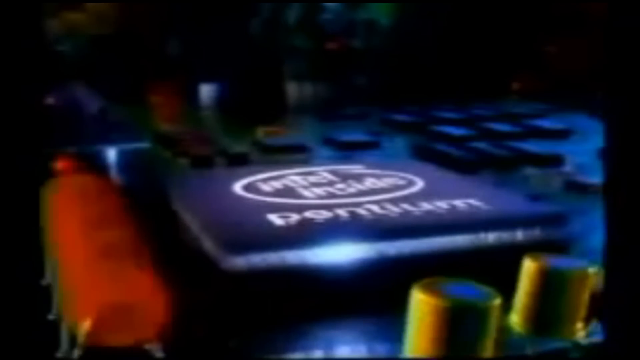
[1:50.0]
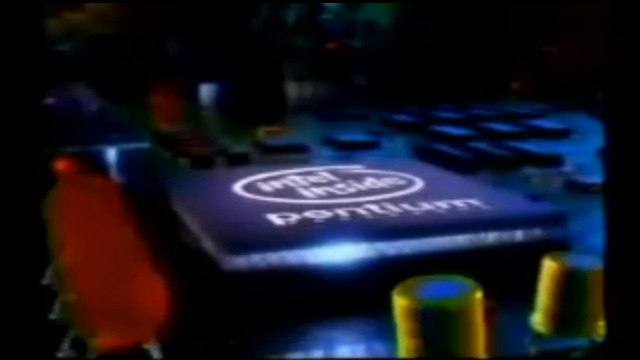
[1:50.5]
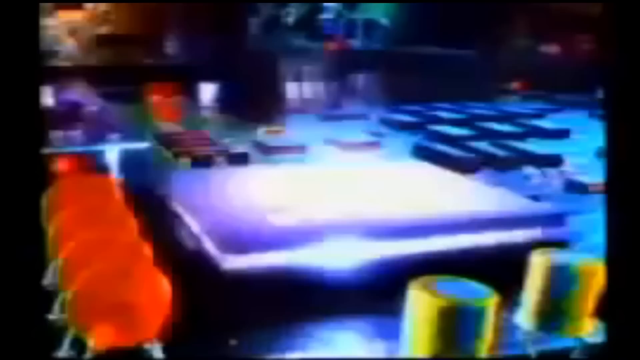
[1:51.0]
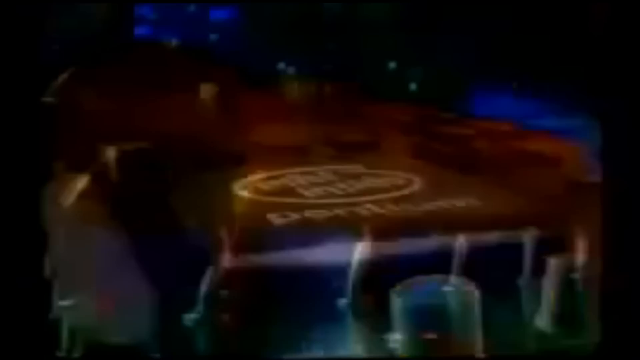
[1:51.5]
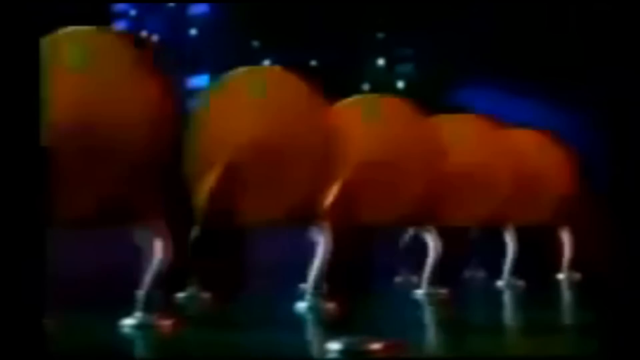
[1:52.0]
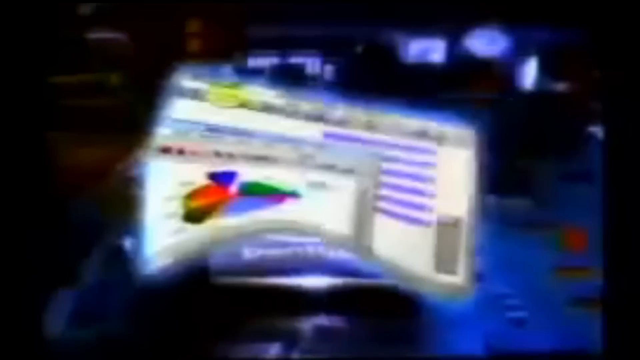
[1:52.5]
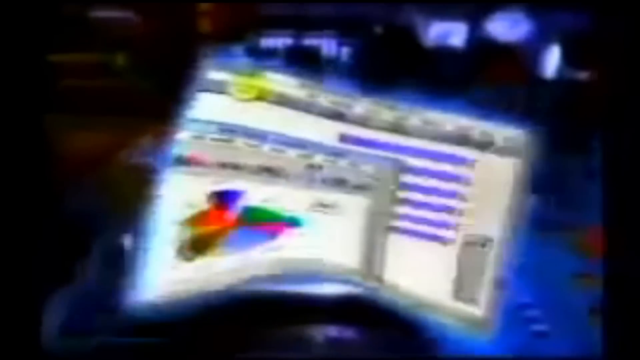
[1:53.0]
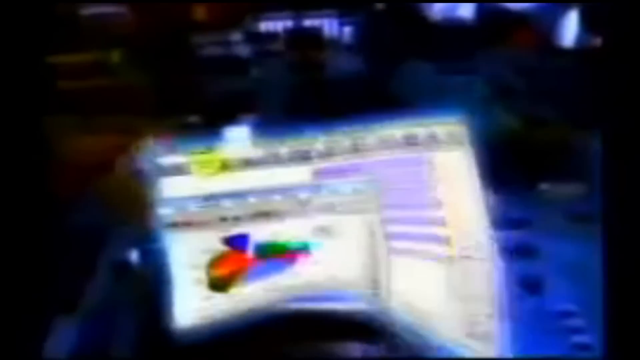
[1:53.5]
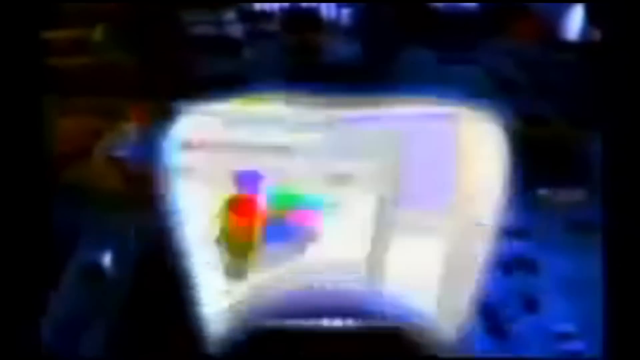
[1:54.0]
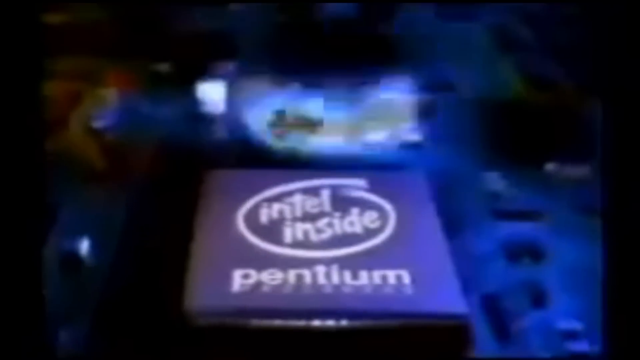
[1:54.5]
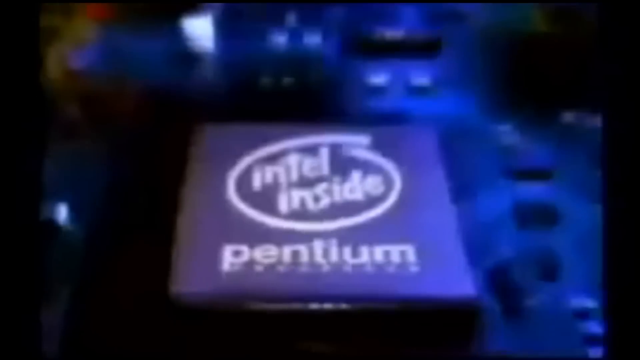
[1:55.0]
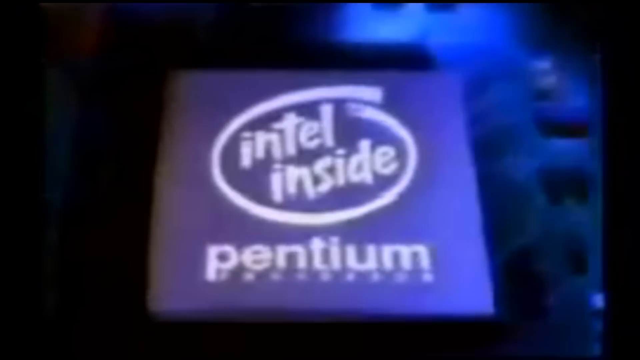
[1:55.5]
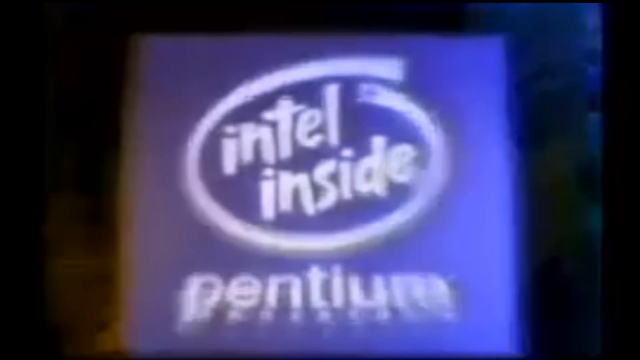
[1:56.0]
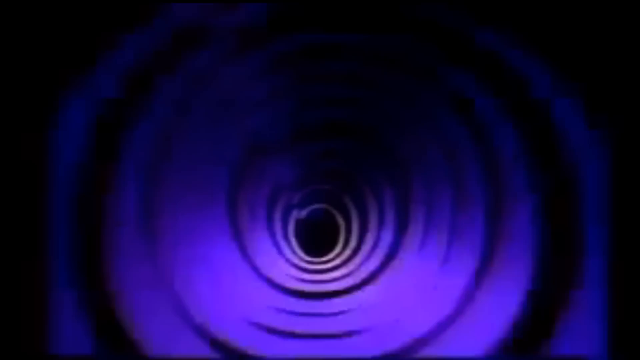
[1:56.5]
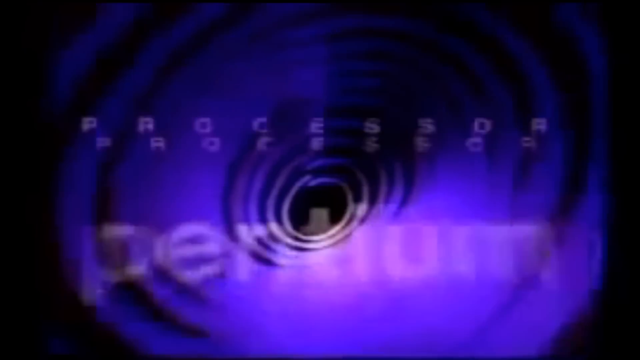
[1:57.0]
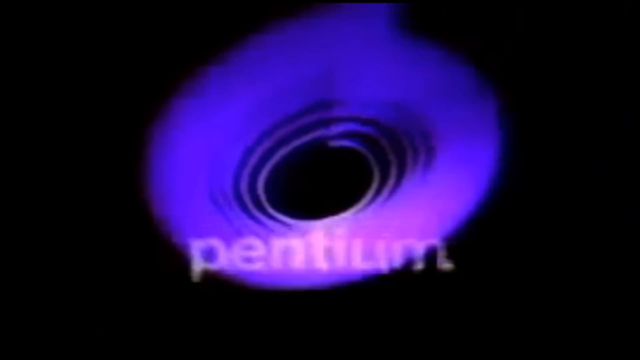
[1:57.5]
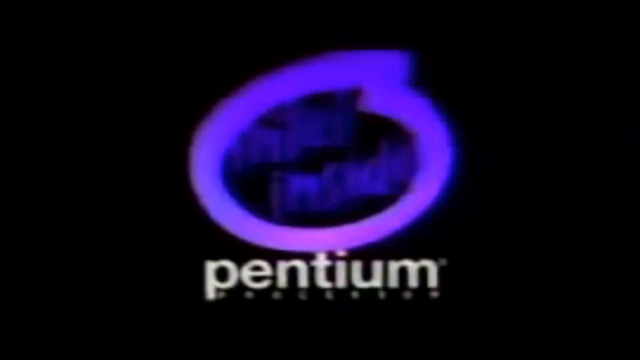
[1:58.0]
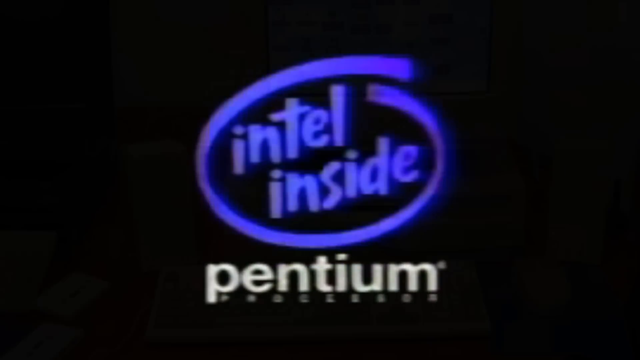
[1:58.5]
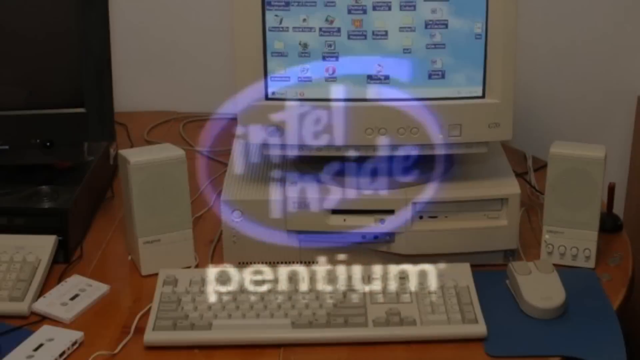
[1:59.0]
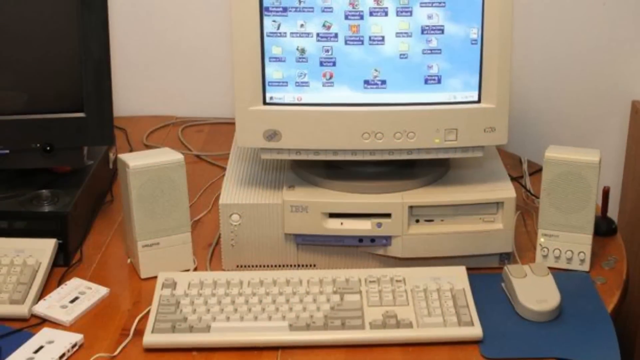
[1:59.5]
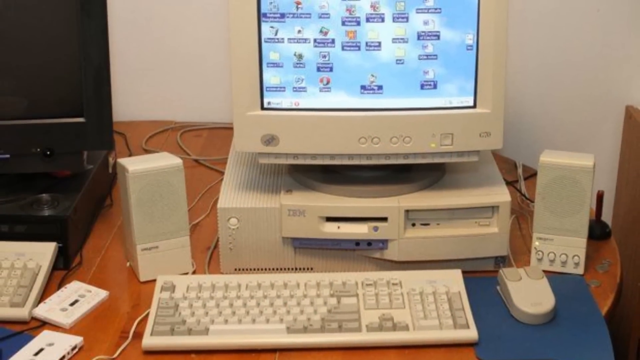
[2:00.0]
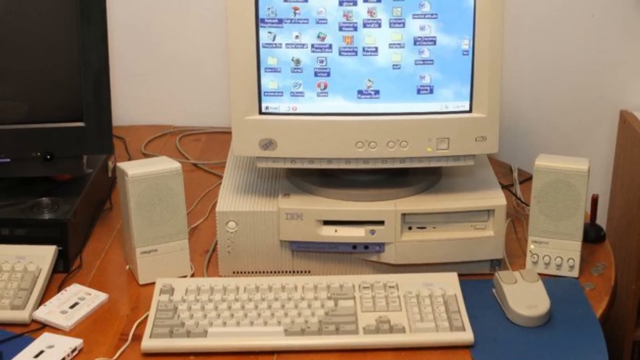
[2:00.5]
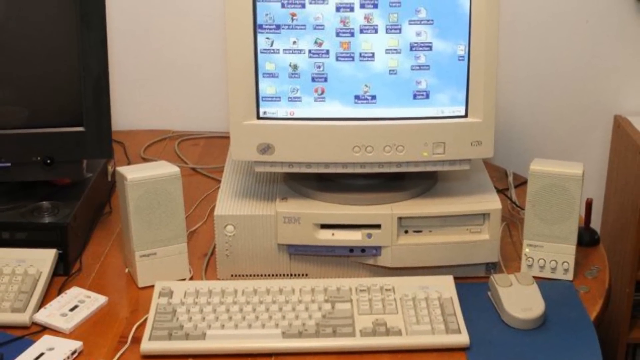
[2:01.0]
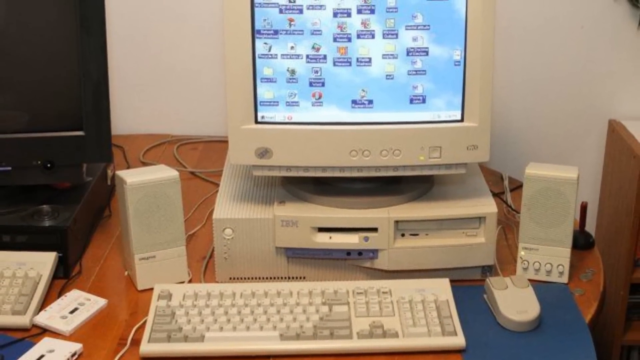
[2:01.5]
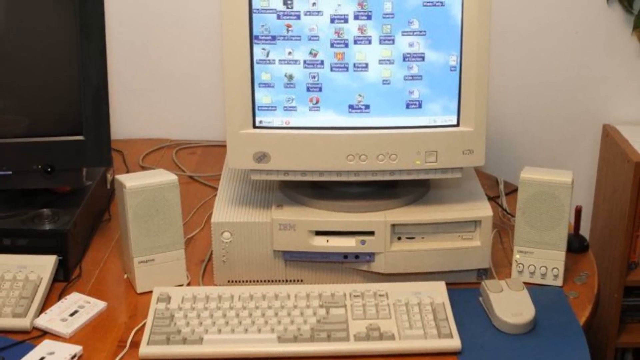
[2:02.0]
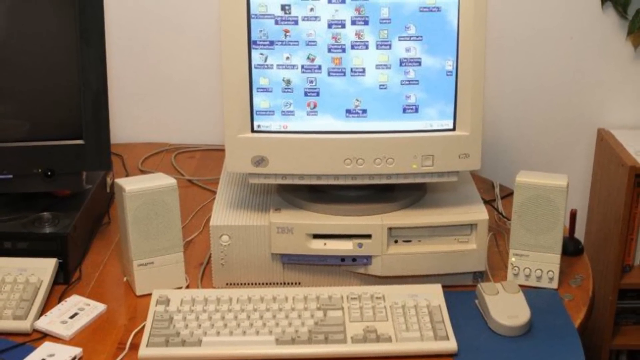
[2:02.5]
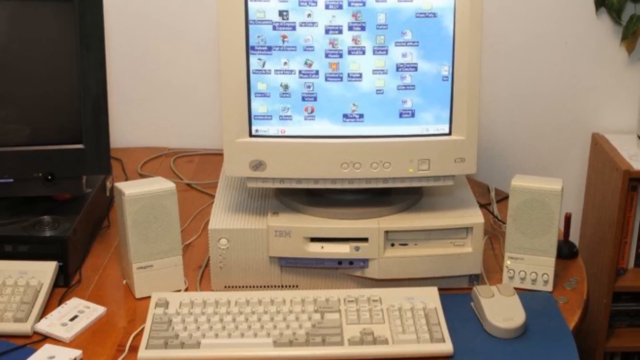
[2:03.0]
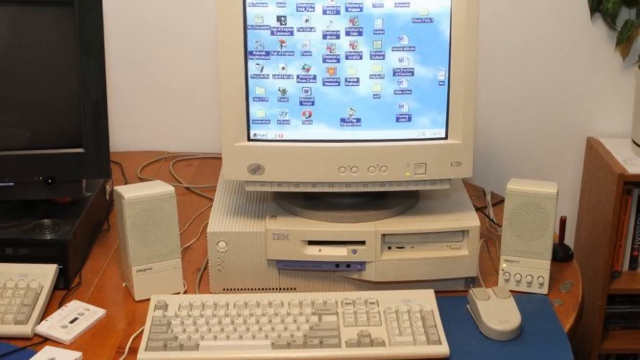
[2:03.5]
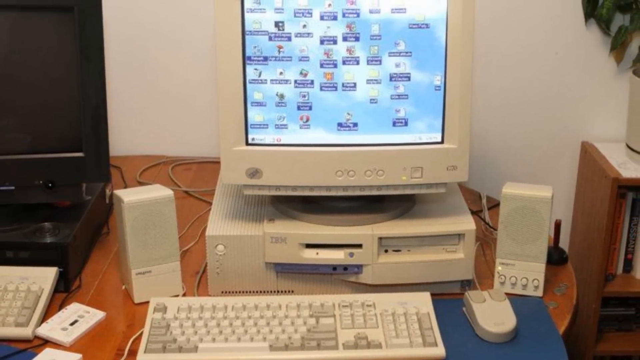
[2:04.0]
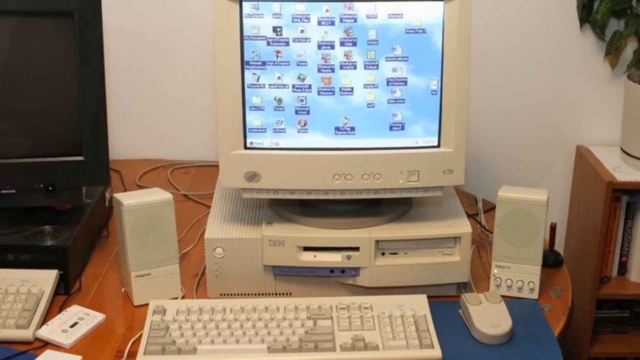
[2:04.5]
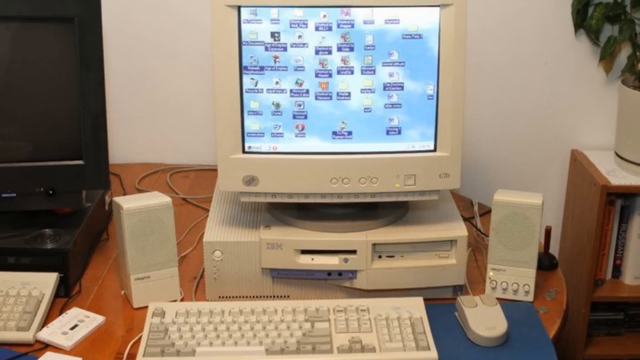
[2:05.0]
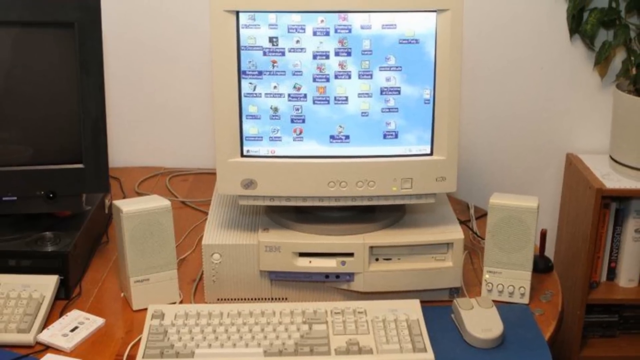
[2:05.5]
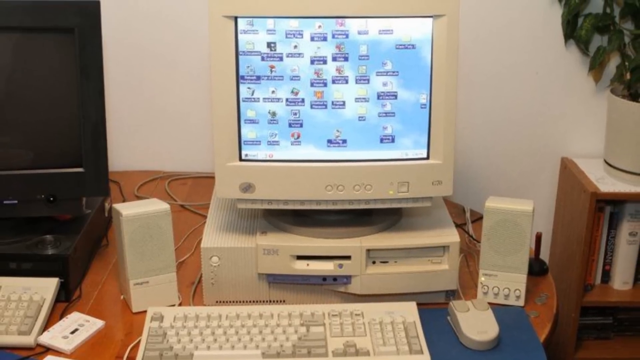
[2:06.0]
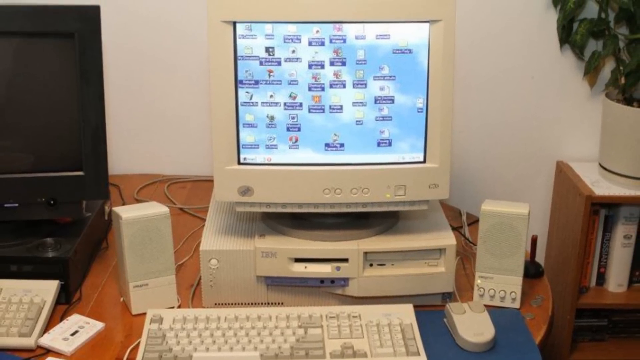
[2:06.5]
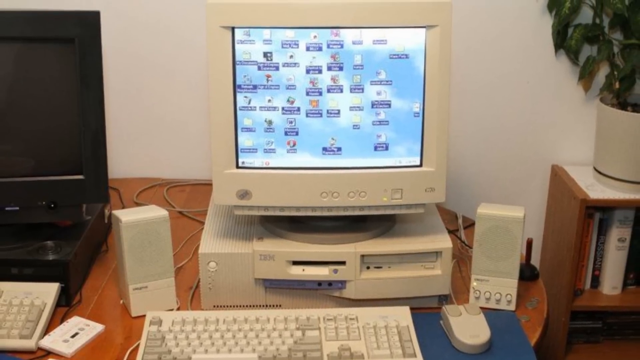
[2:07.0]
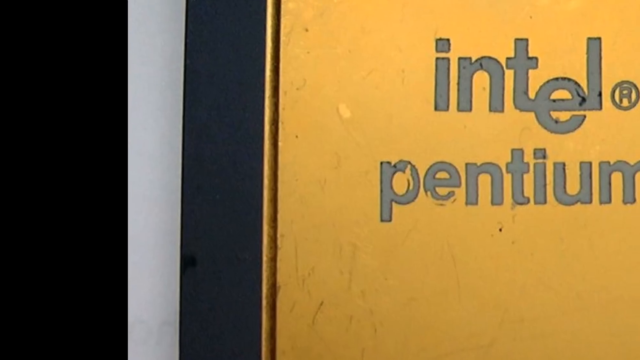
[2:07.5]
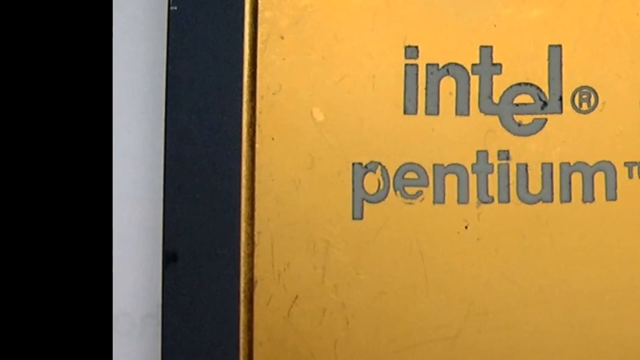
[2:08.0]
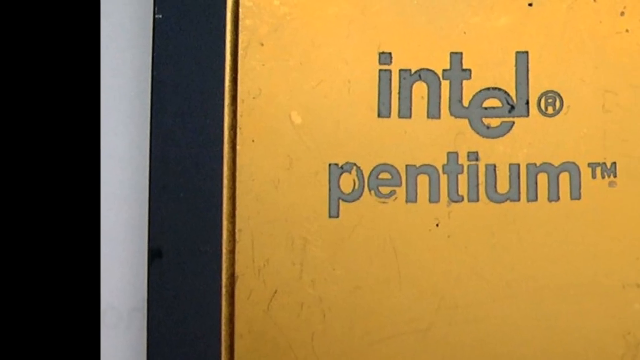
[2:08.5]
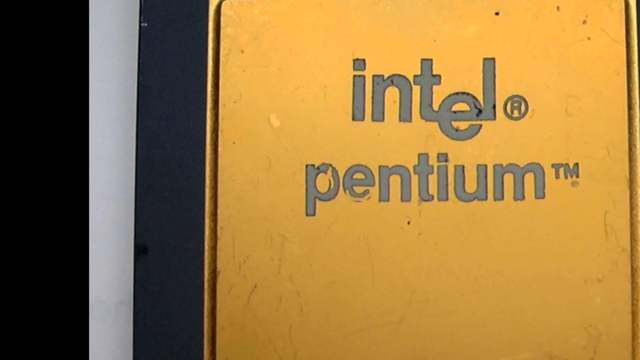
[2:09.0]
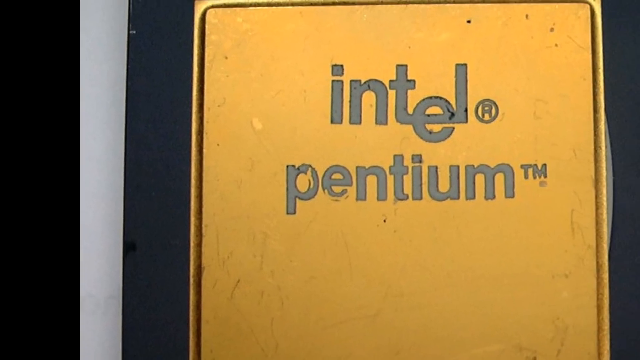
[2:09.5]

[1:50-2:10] A processor chip is shown with the circles and cylinders sort of dancing around it. The orange circles then twist a lot faster. The front of the computer screen is shown jumping into the Intel Pentium processor, and as it jumps in, a flash of light comes out. A logo that looks very retro appears: it says "Intel inside" with a circle around it, and underneath is "Pentium." Then a very old computer setup is shown: a big, bulky desktop monitor sitting on a hard drive, two speakers, a keyboard, and a mouse with two buttons on top that would reach from the tip of a finger to about the first knuckle. The older hardware has places to put in CDs and floppy disks.